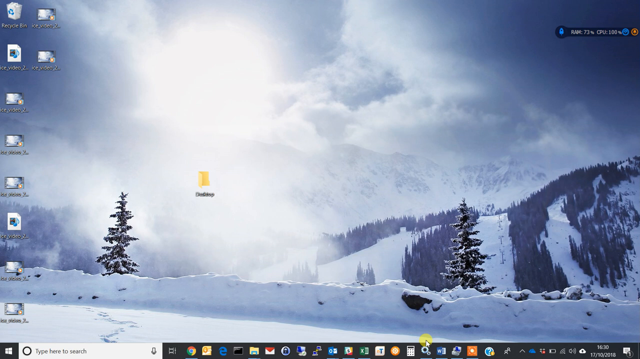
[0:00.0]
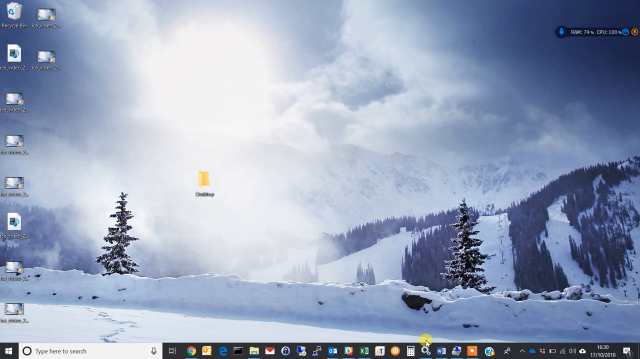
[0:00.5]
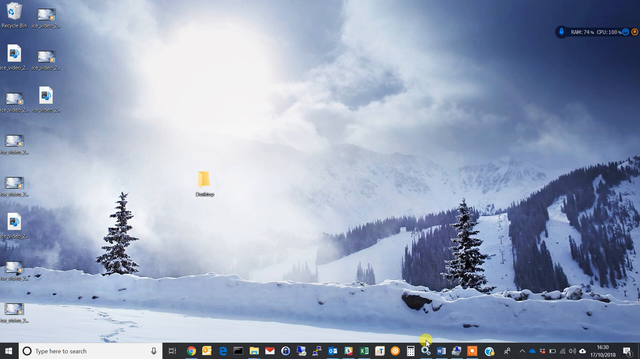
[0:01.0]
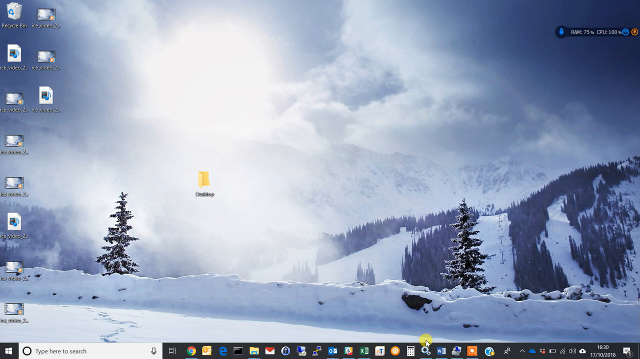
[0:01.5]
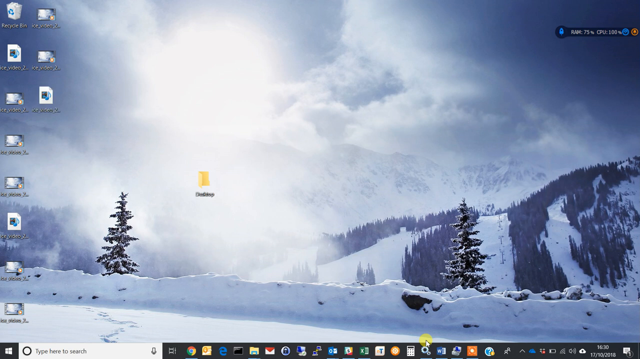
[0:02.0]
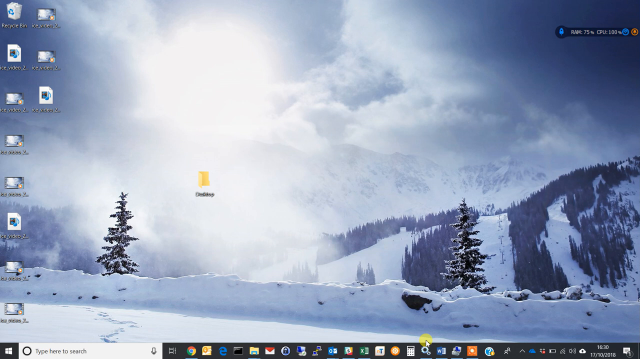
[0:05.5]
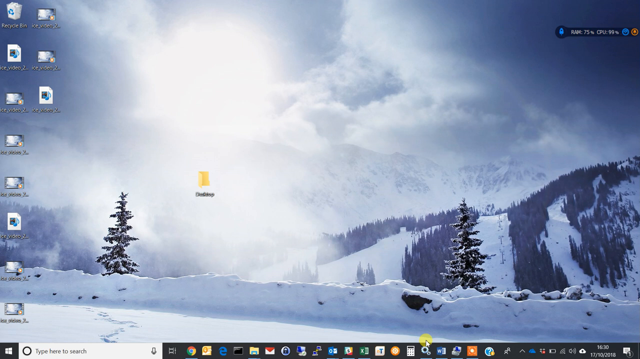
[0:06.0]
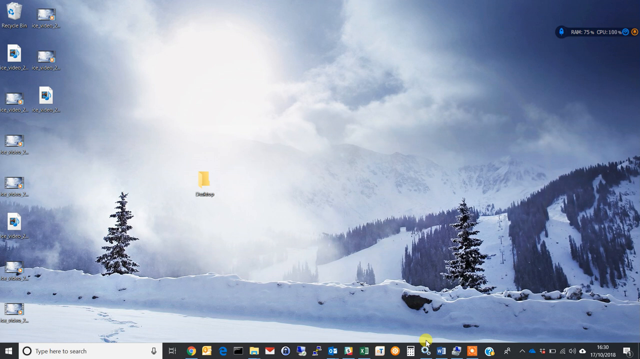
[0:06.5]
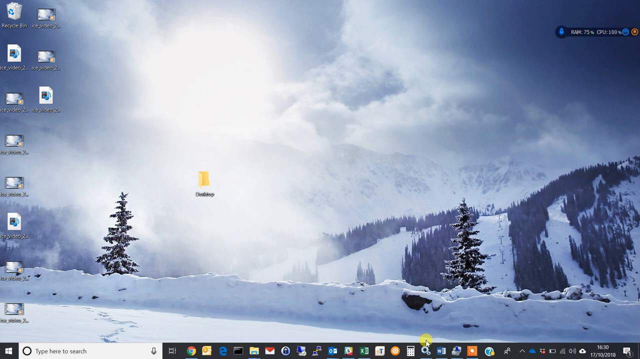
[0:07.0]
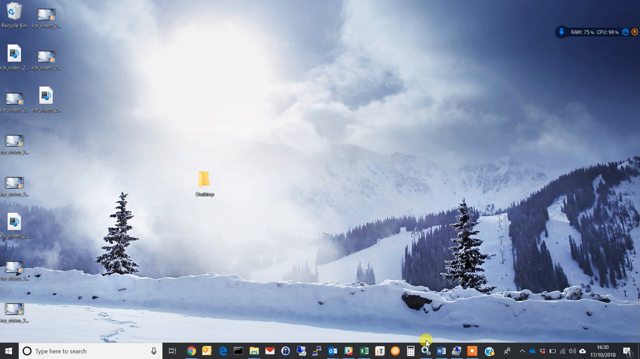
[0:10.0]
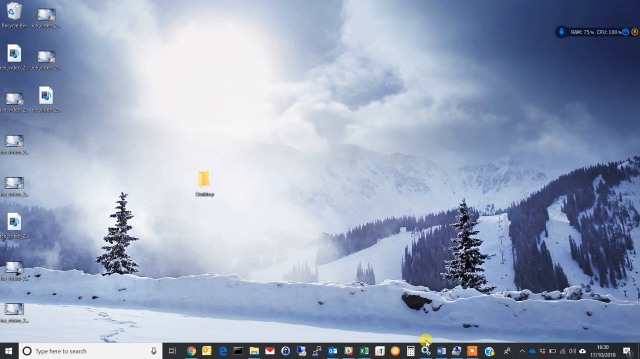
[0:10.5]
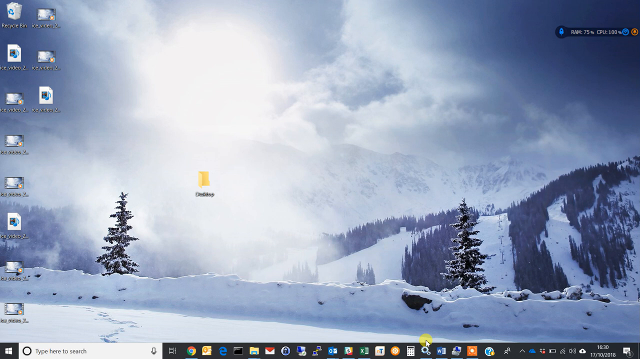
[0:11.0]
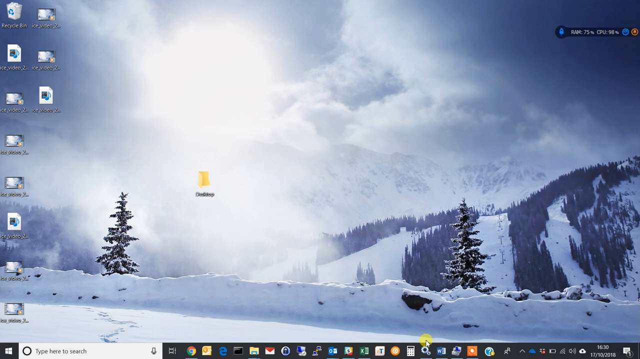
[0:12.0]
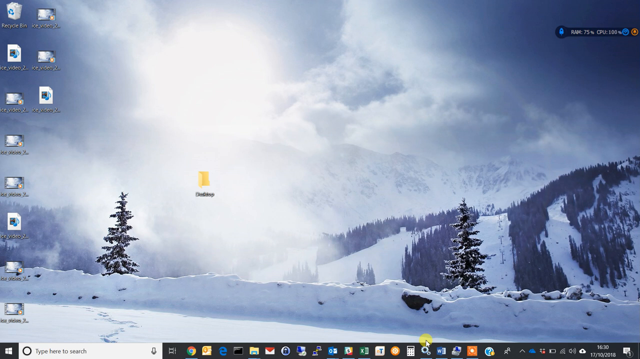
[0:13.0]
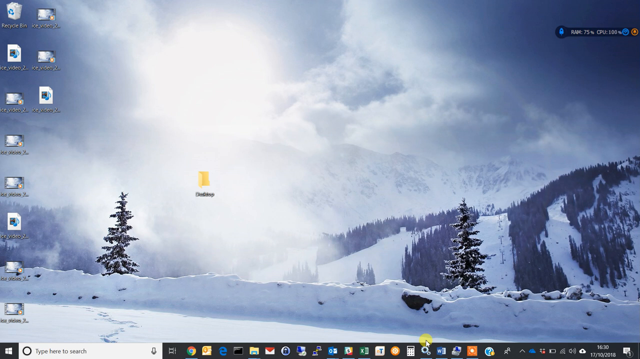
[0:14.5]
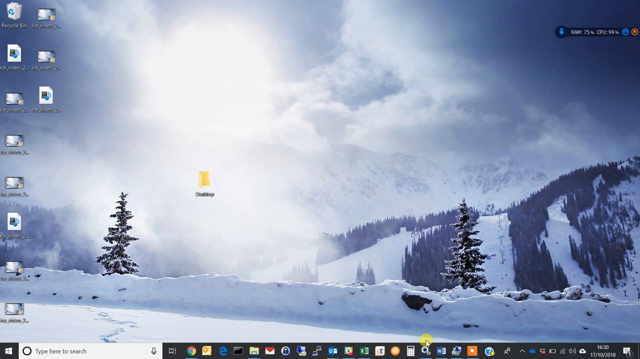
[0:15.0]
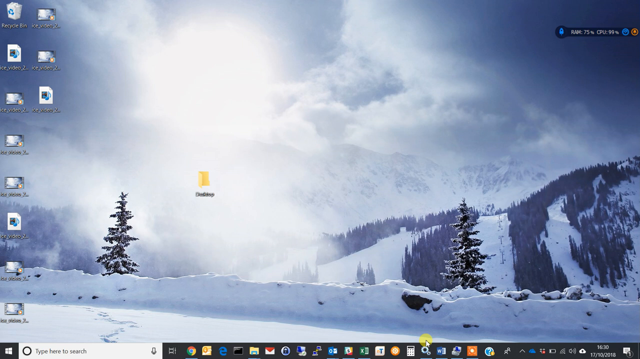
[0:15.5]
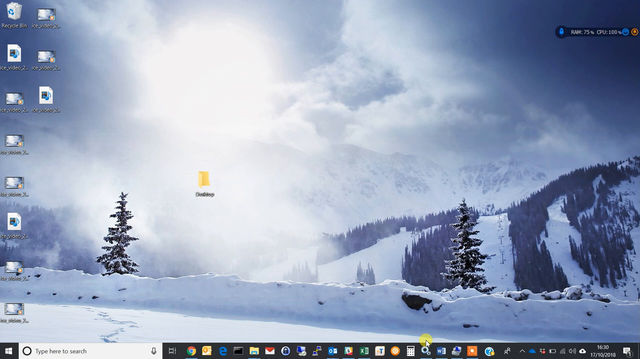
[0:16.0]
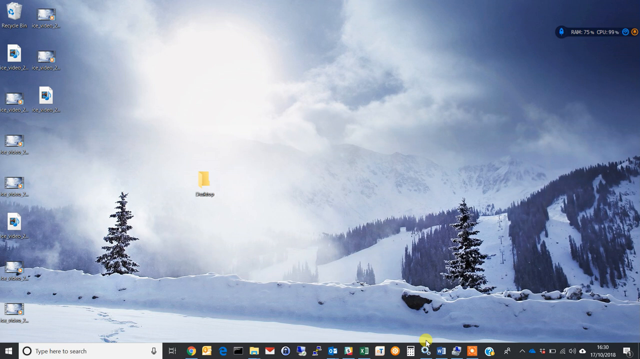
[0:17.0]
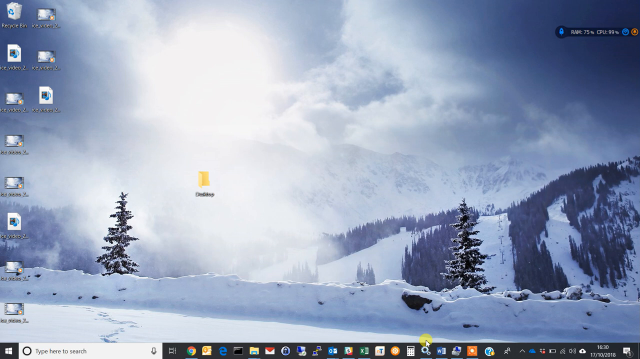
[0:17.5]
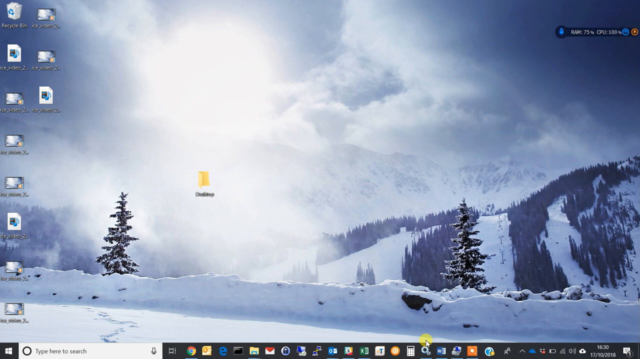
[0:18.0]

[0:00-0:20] A desktop displays a winter wallpaper with many trees and a snowy mountaintop with rolling hills. Many icons cover the desktop; some appear to show images, while one shows a folder, and there is also the recycle bin. At the top right is some kind of emoji or widget that appears to show the computer's statistics, such as the percentage of RAM used and the CPU temperature. The background has a misty or foggy appearance, with a very bright spot on the left where the sun appears to be shining from behind the clouds, illuminating the scene. The wallpaper is realistic, perhaps a photograph with some editing, and its most obvious feature is a very large expanse of snowy mountains with pine trees. In the background are a few large metal pole-like structures, which appear to be pieces of a ski lift positioned in succession going up the hill.